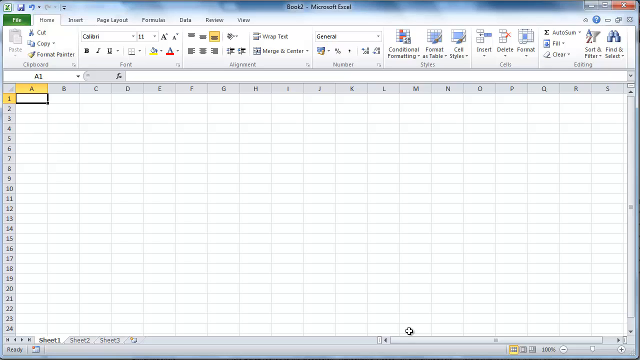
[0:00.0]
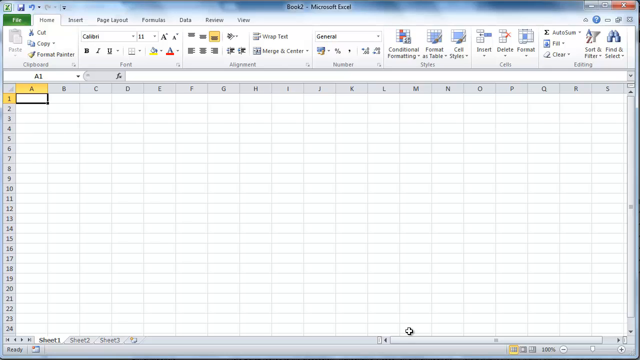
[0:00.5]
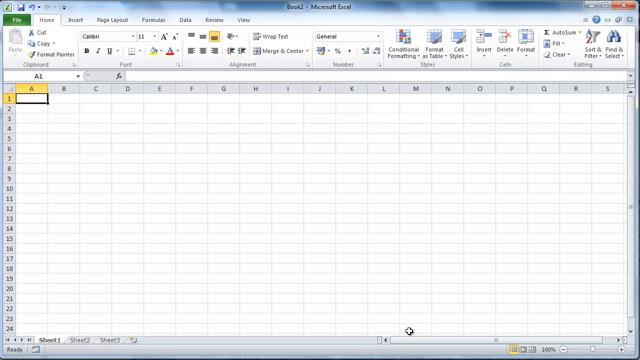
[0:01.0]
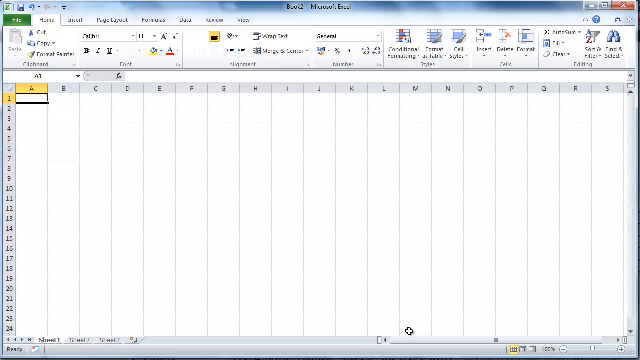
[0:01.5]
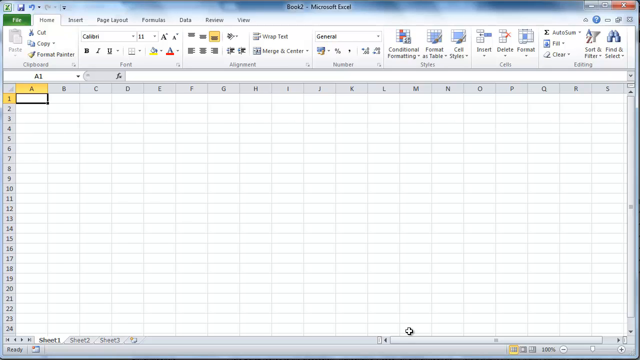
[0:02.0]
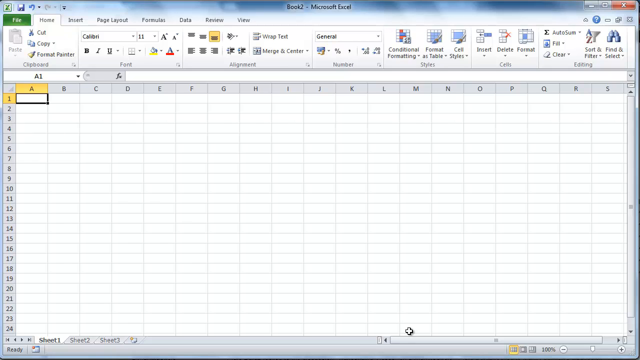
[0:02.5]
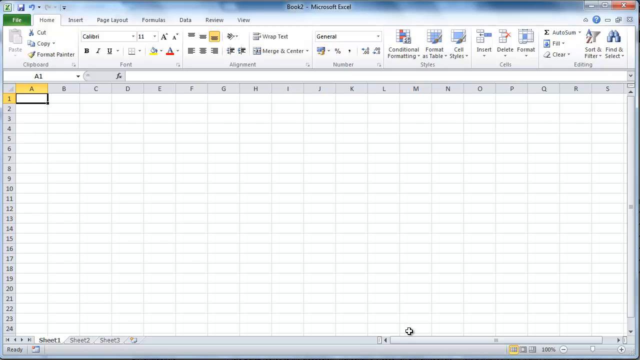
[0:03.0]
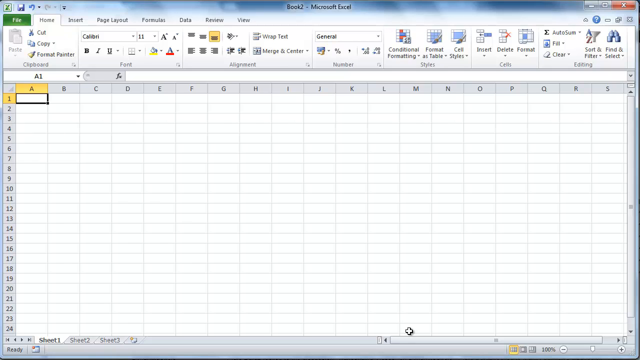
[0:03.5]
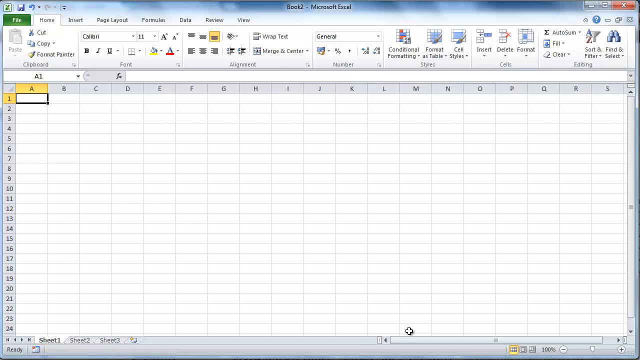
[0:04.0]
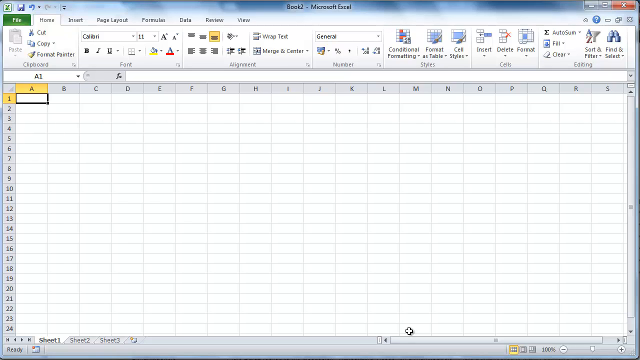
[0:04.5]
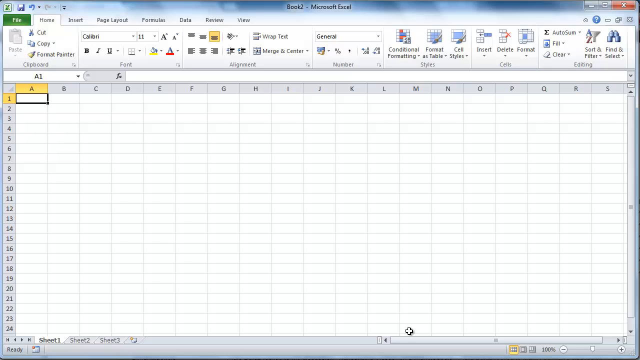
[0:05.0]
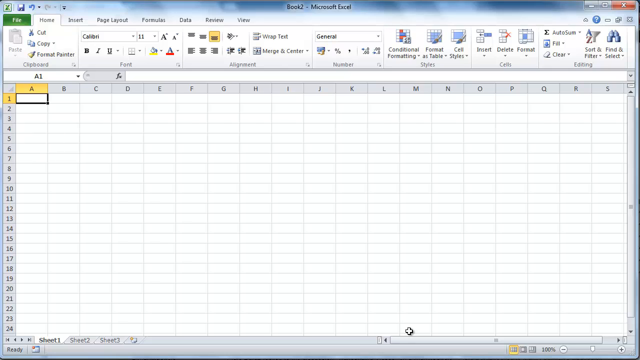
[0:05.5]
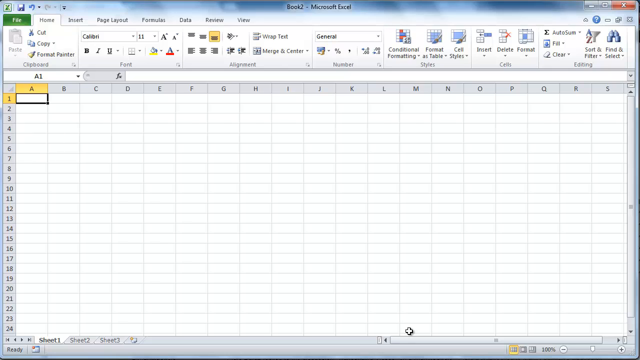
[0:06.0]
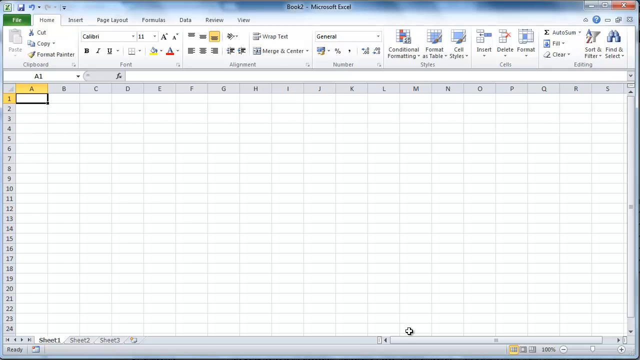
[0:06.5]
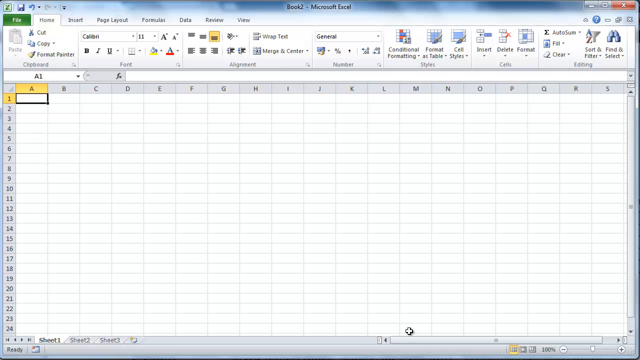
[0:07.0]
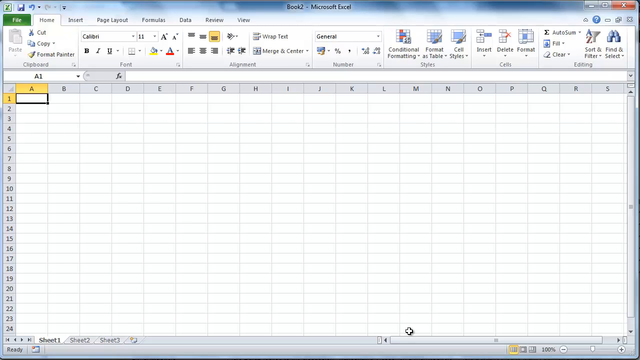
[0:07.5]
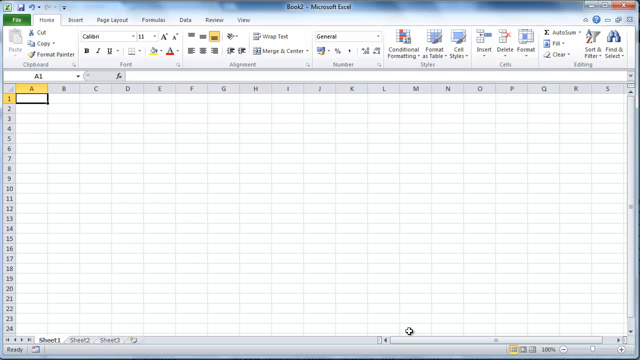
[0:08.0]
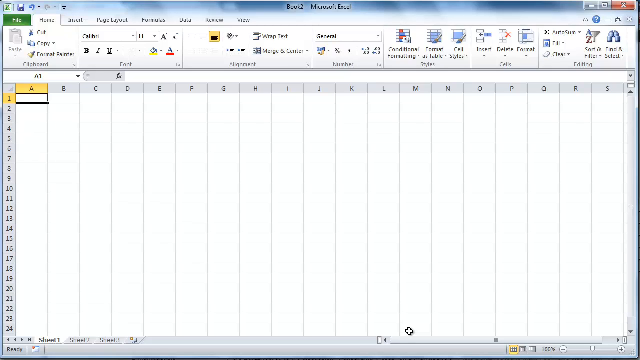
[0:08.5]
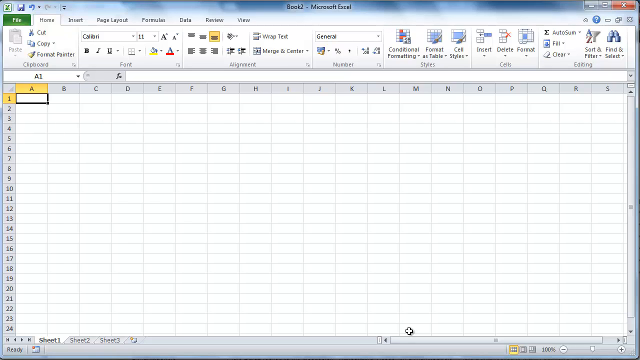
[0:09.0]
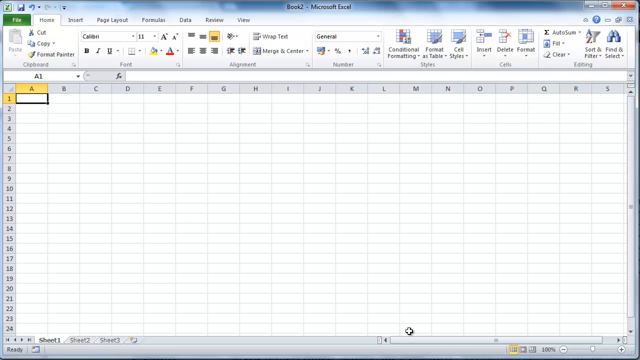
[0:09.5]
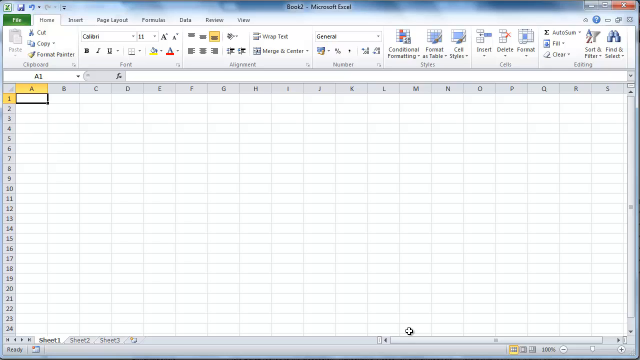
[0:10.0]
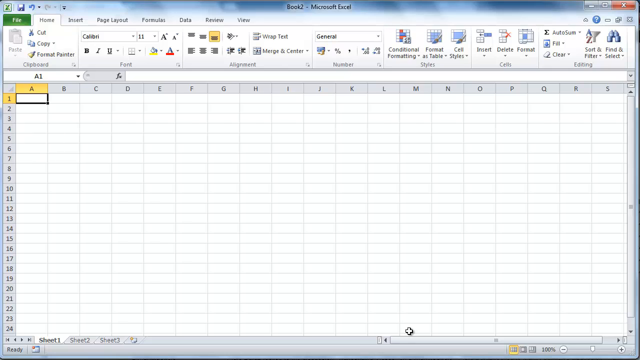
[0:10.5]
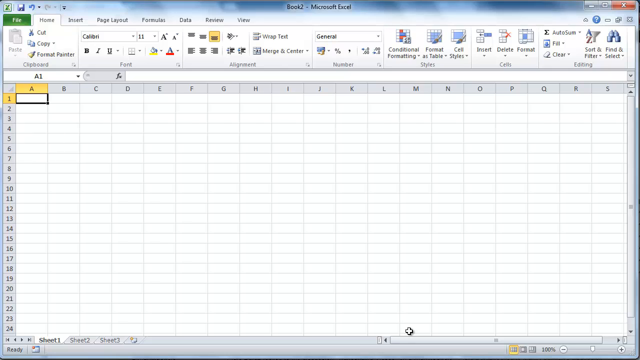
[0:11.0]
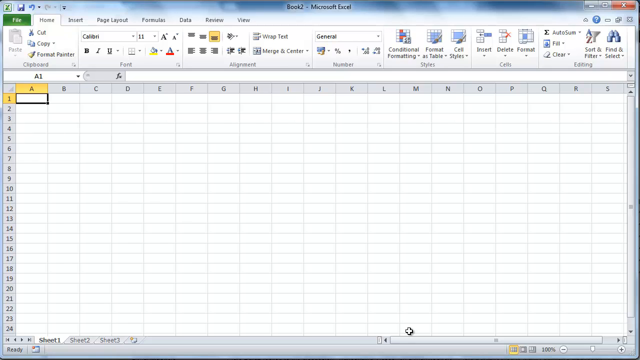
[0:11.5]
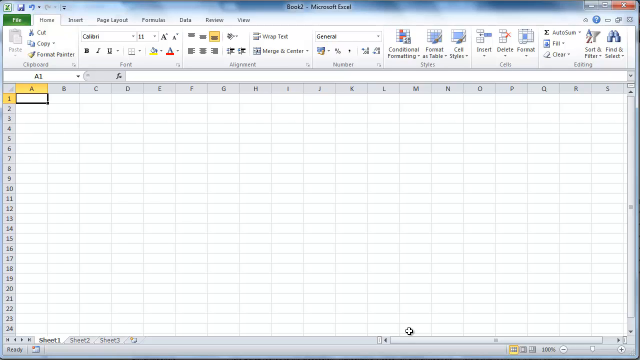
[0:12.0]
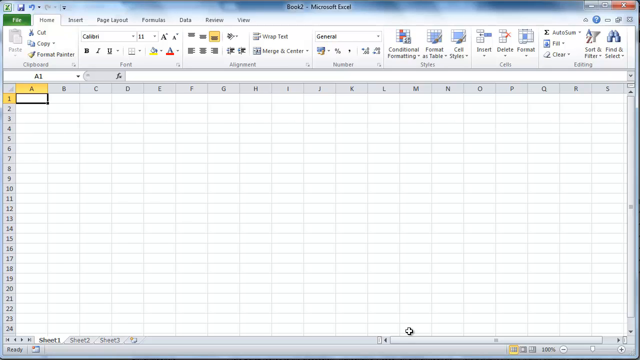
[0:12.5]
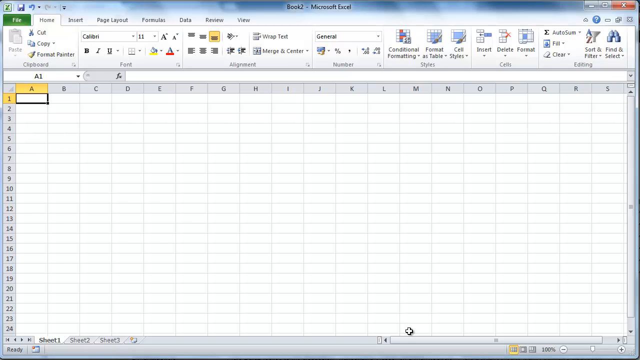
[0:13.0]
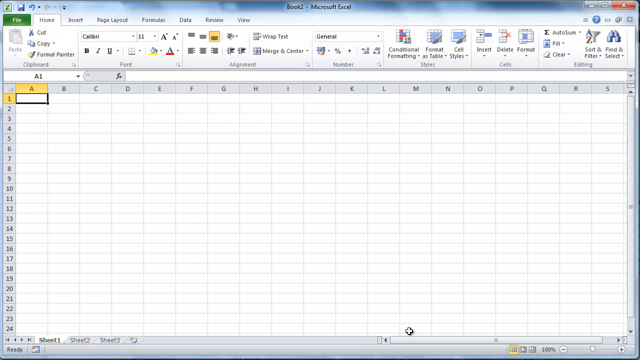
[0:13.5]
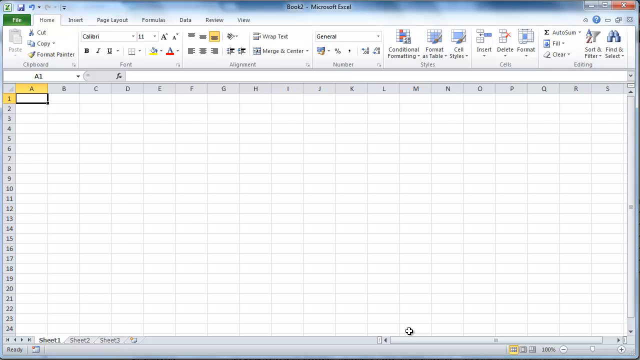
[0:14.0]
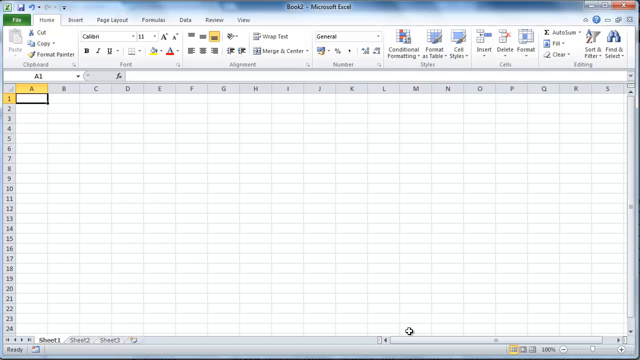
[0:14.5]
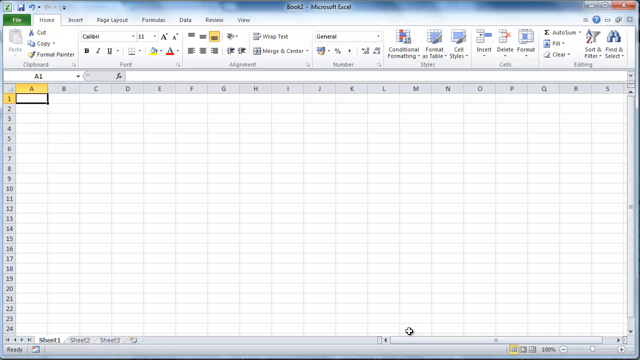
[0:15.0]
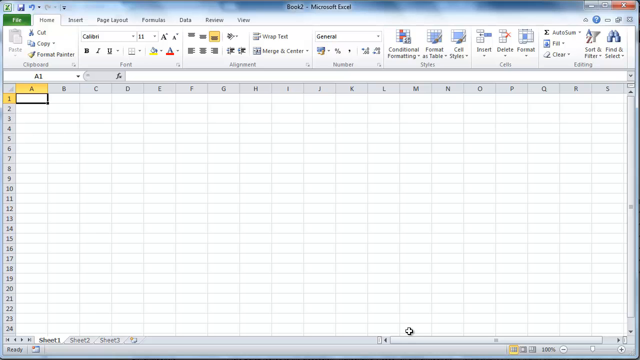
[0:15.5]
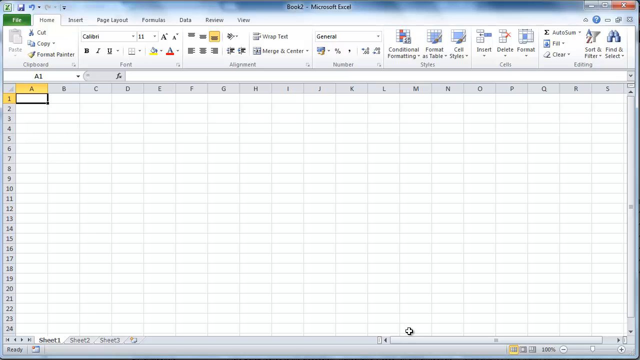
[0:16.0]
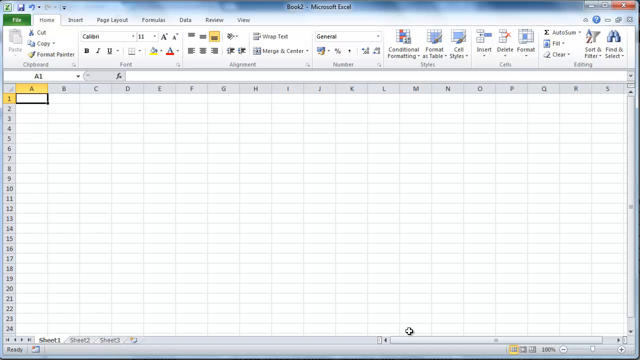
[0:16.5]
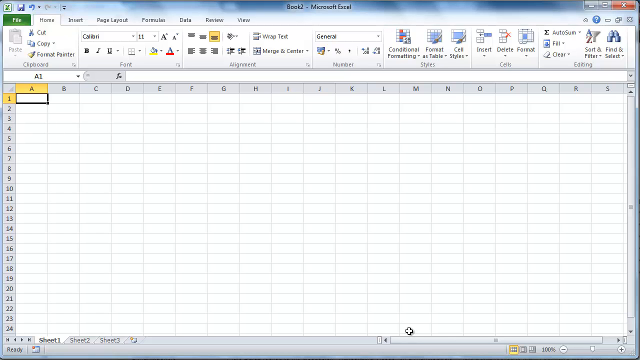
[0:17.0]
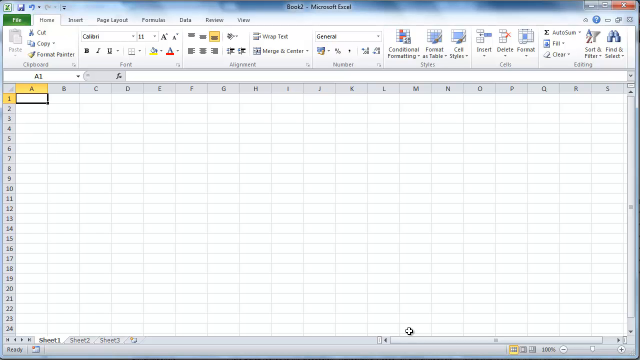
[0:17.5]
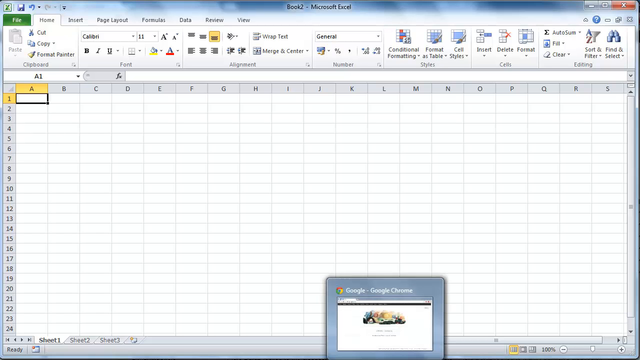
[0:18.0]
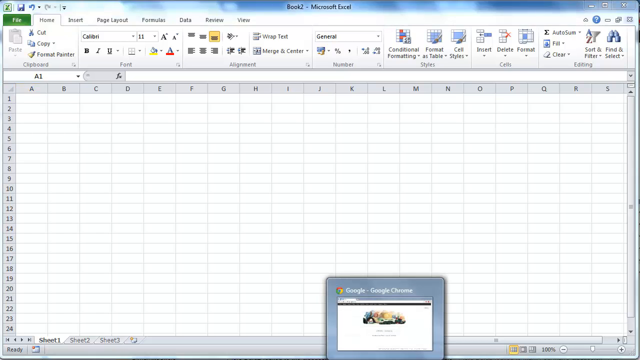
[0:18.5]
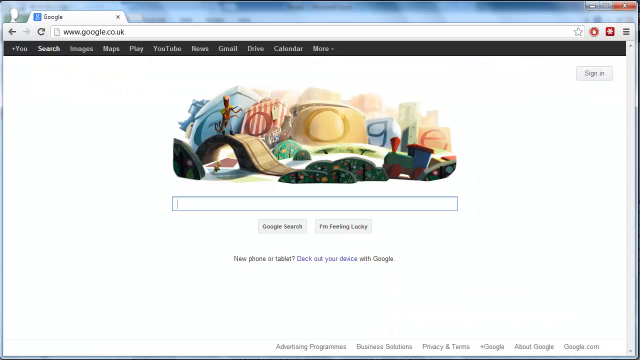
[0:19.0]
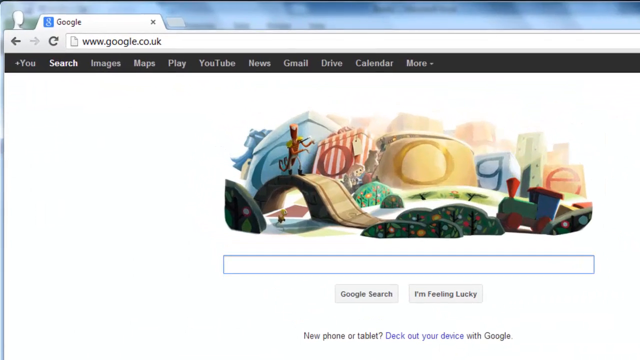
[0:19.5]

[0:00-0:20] Microsoft Excel, part of Microsoft Office, is open to a blank sheet in a workbook named Book 2, with the font set to Calibri, size 11. There is no text on the sheet. In the last part of the shot, the person goes into Google. The video is possibly a tutorial.